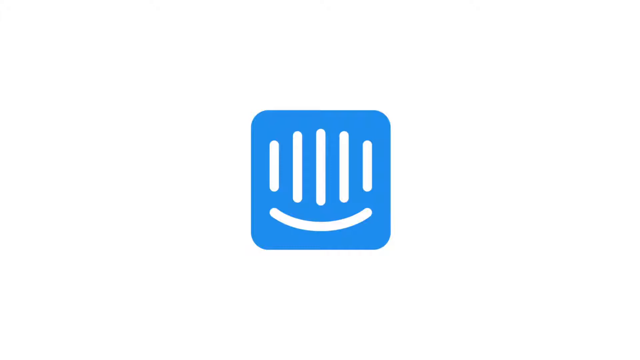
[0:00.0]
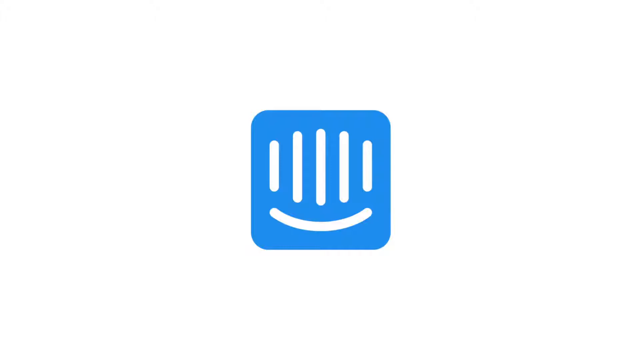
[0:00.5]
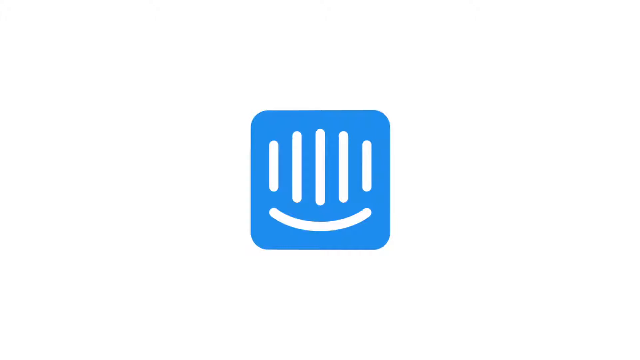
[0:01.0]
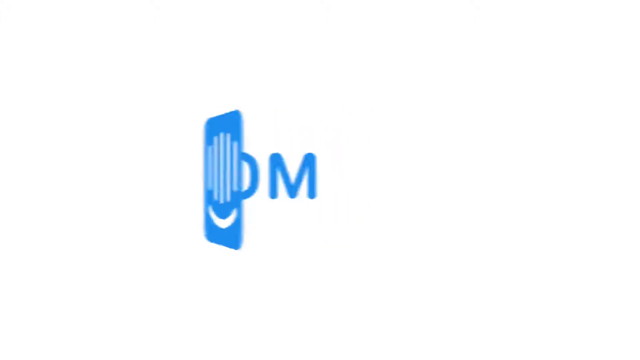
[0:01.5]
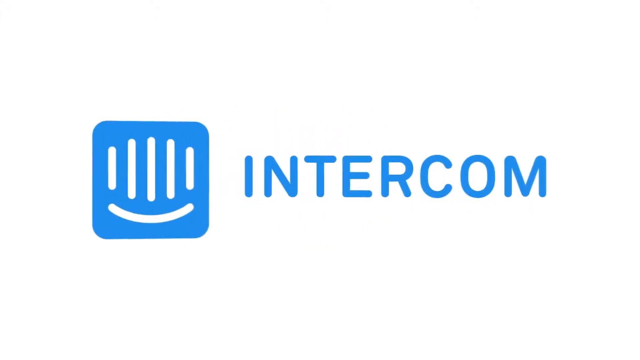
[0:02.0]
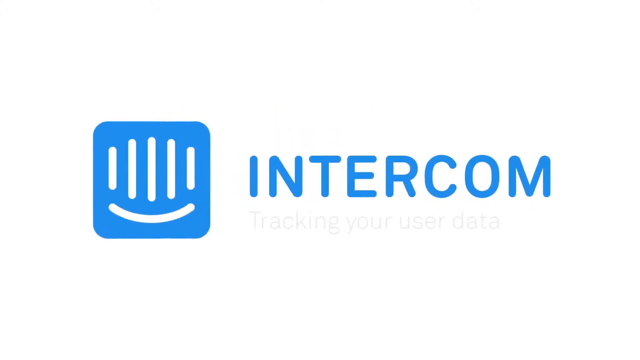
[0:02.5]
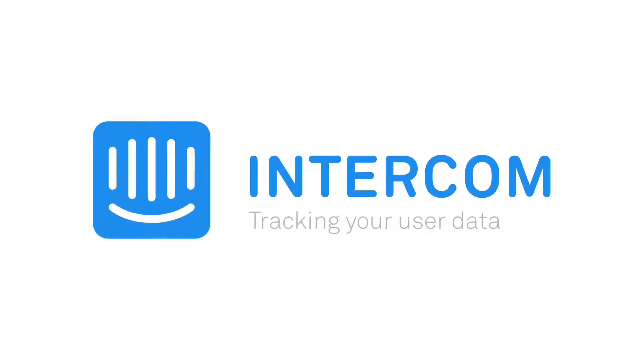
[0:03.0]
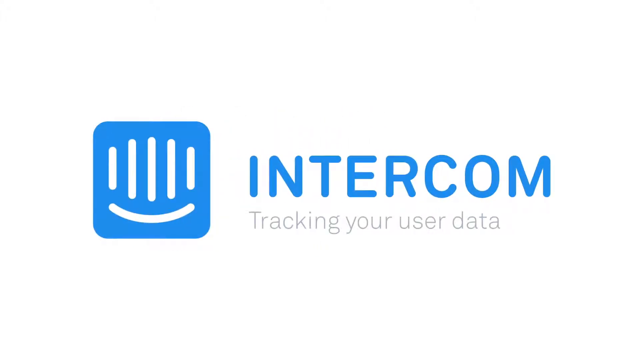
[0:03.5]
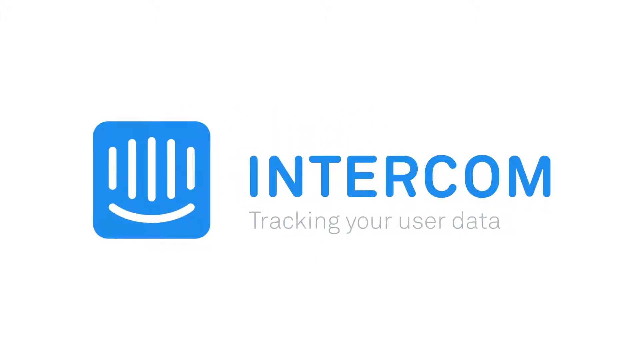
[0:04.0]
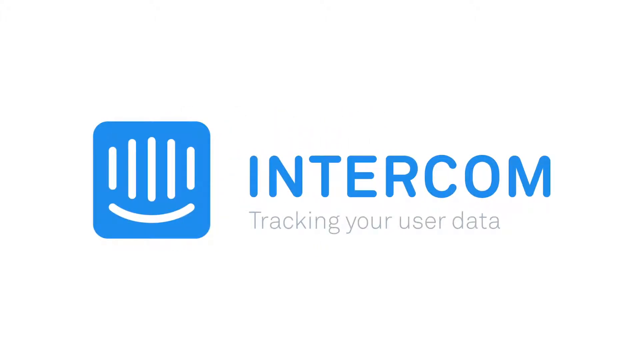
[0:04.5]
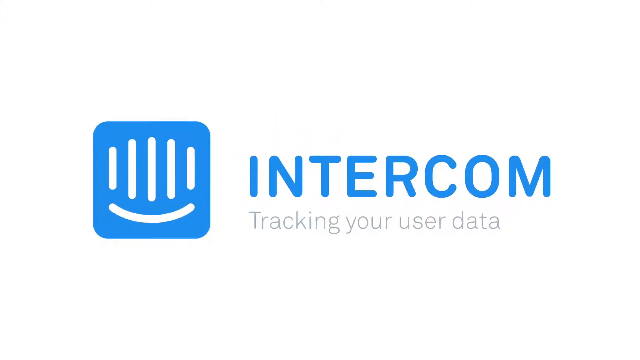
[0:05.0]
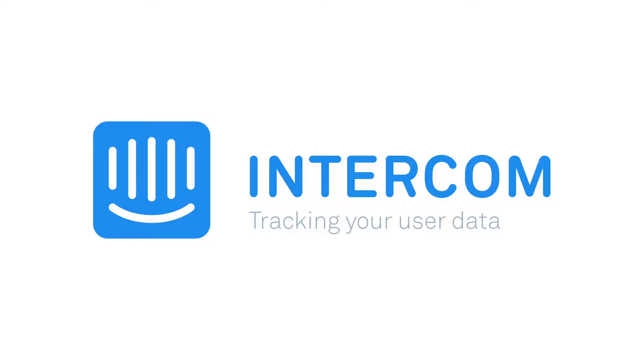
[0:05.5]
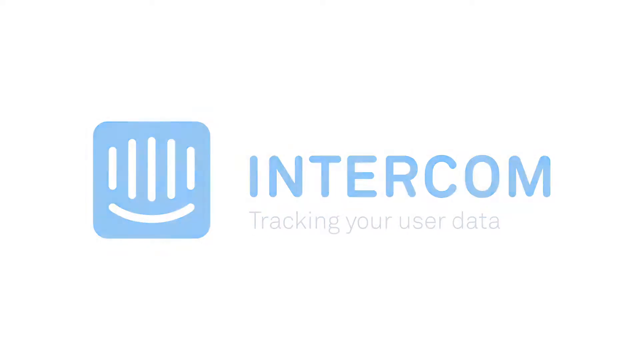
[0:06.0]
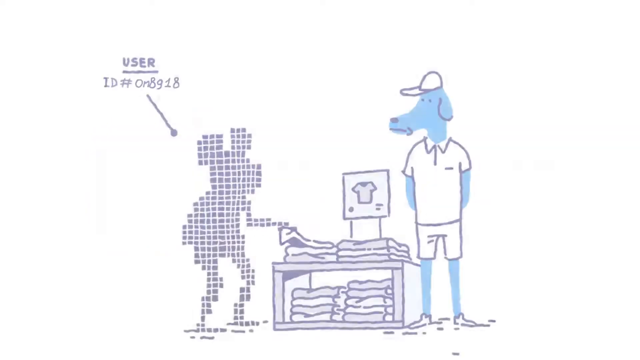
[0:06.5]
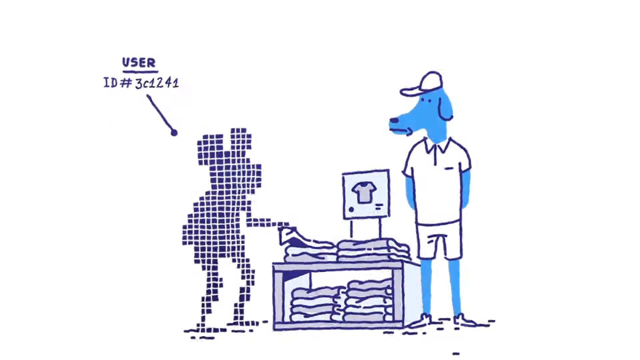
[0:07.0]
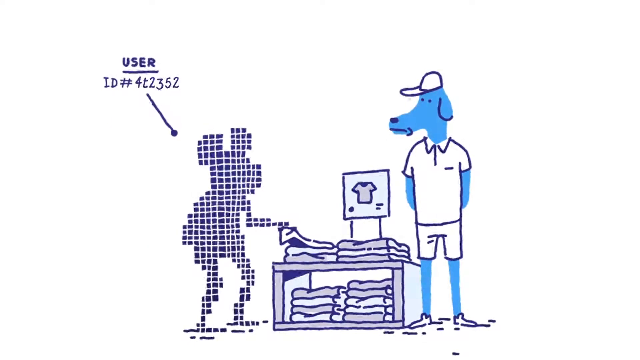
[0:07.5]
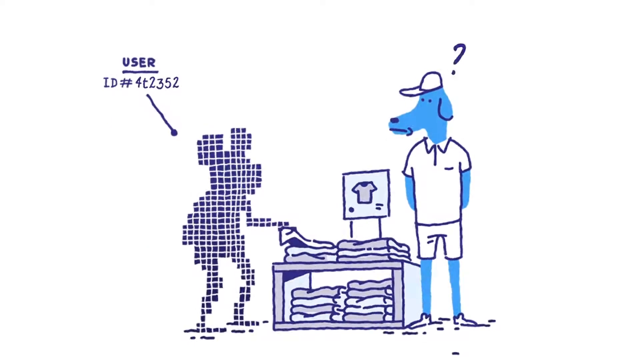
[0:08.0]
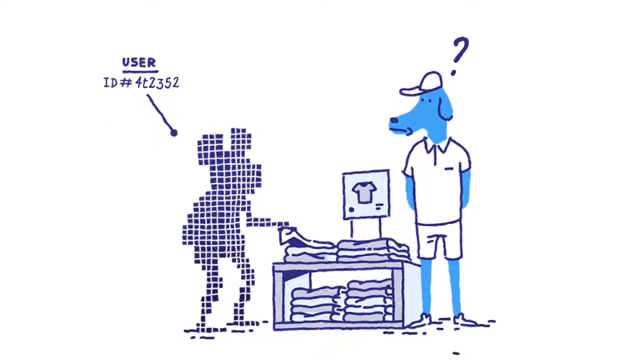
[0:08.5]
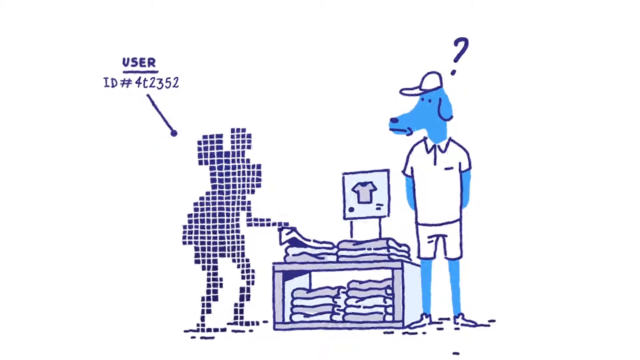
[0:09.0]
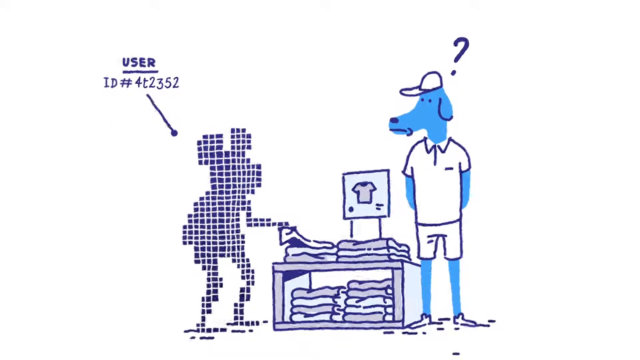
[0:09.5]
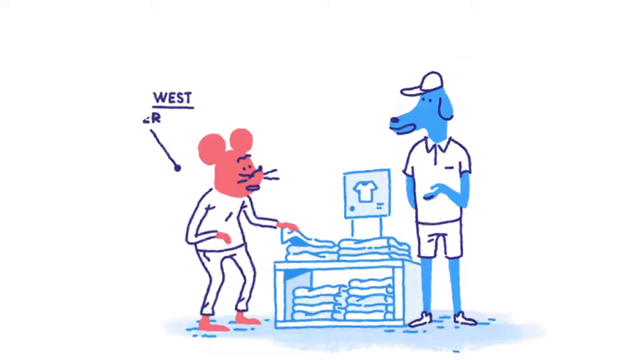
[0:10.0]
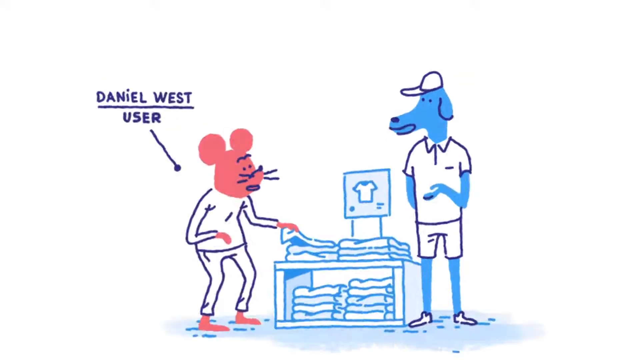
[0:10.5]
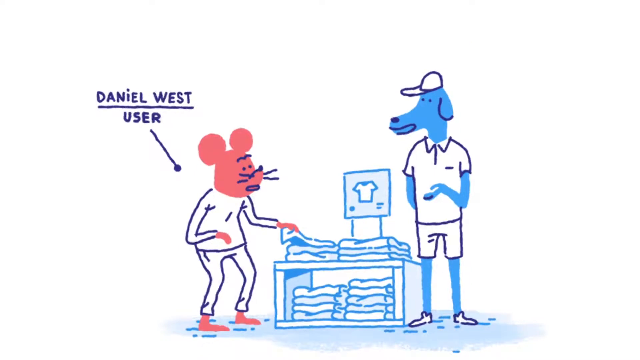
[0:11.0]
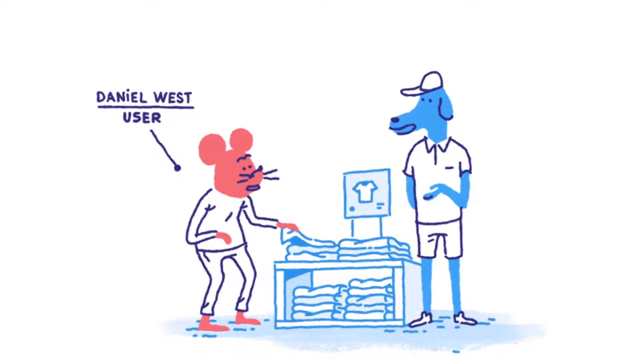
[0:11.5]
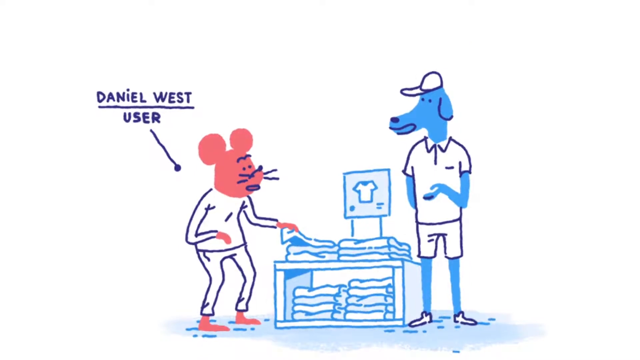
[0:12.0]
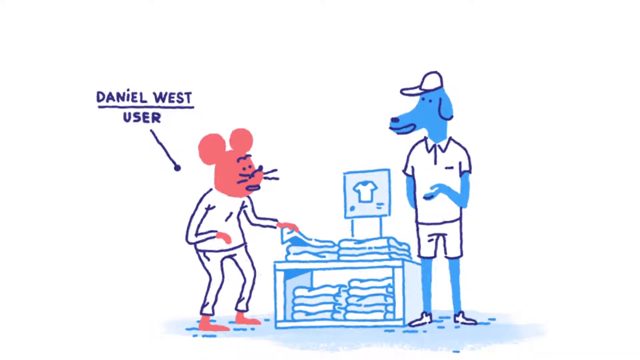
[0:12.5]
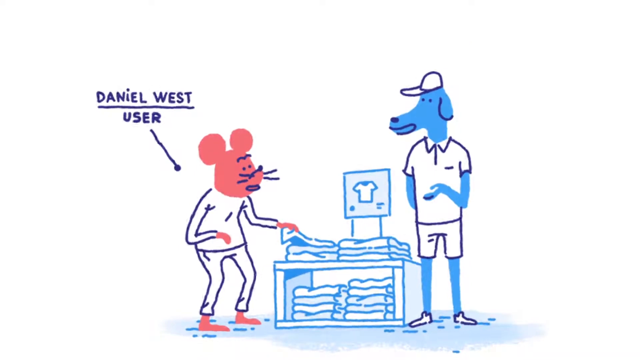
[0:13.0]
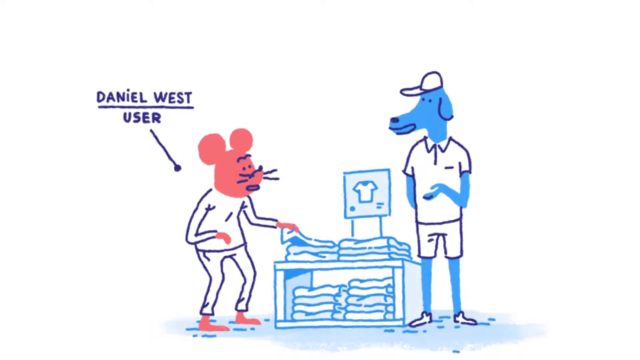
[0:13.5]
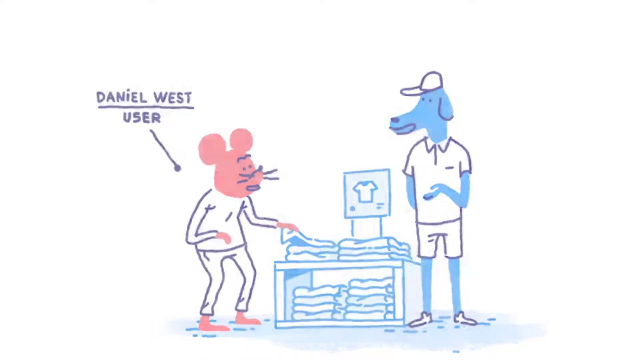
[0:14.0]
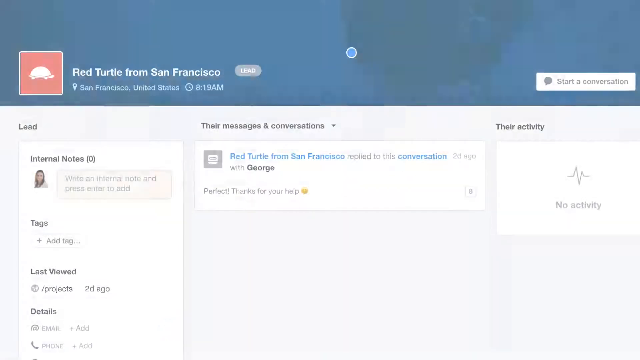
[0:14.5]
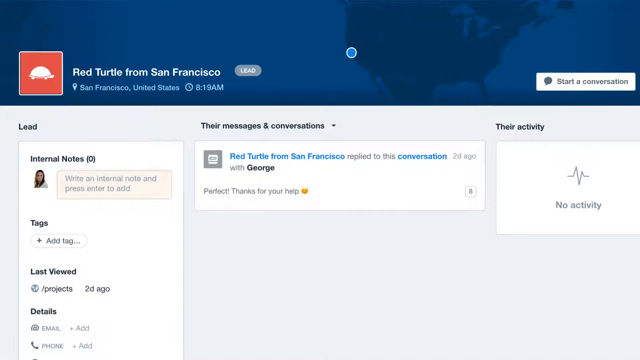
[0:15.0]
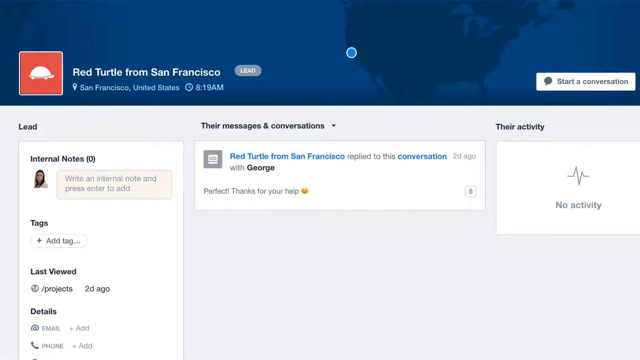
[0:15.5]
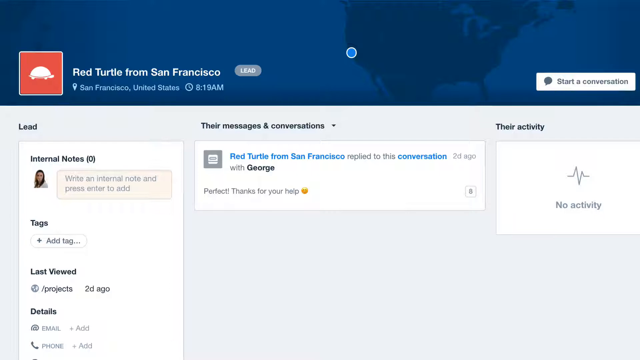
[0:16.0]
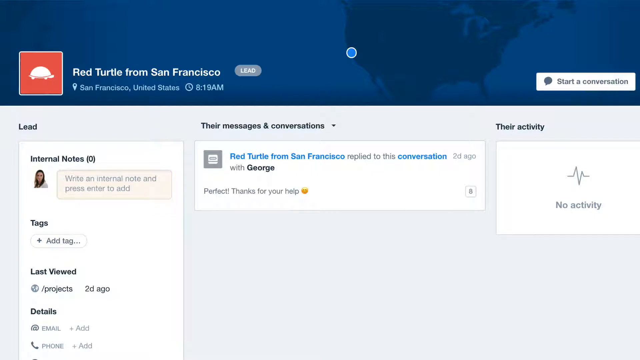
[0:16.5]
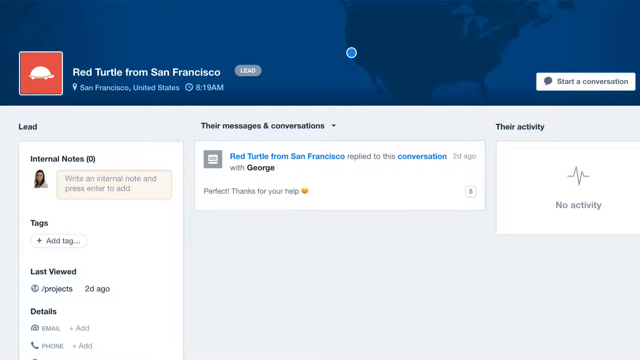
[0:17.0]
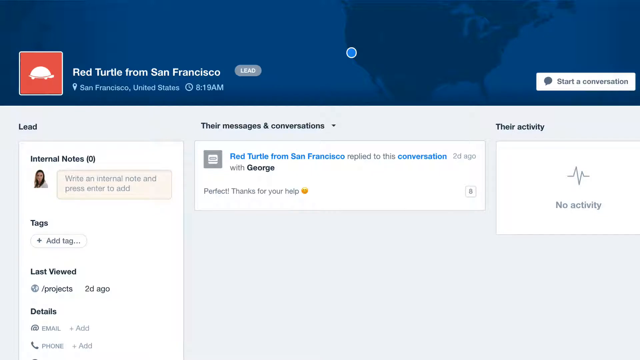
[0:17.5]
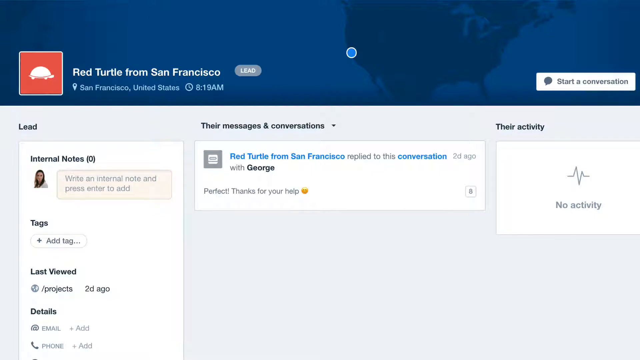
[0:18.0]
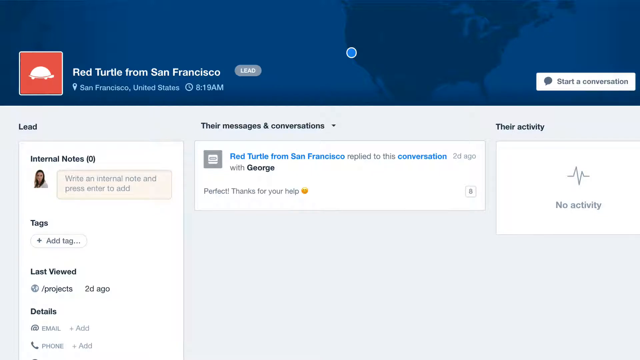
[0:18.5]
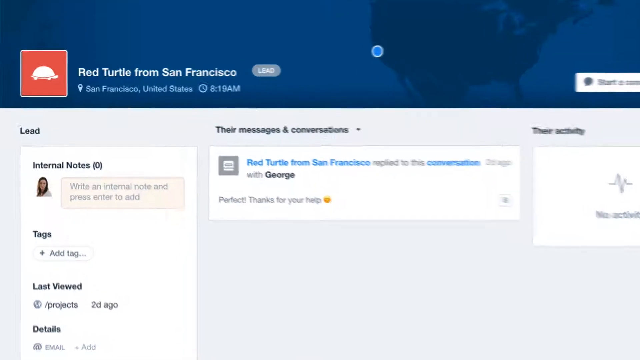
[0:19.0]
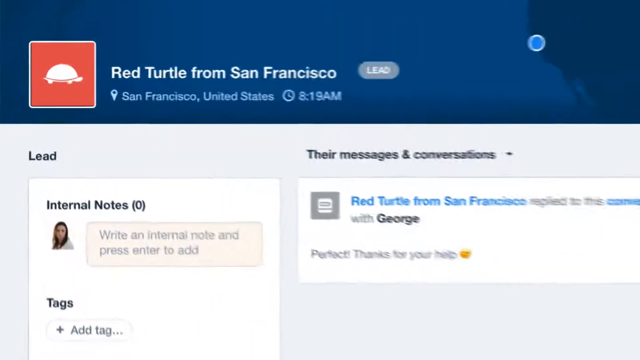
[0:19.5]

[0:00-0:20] An off-white ivory screen is dark at the bottom and fades into gray and then to off-white ivory. In the middle is a blue square with five vertical lines; the middle one is longer than the others, and they taper off to each side of the long line. Underneath them is a half circle that looks like it could be a smile from left to right. The screen then flips to text reading "Intercom tracking your user data." A pixeled mouse or pixel dog with pixeled ears standing up appears; its left upper extremity is pixeled into little squares, and it is reaching for something on a table. A picture of a shirt is tacked up on the paper, and on the back of the table it says "user ID #4T2352." To the right of this display is a larger figure that looks like a dog, with a blue body, blue limbs and blue legs, and a baseball hat on the question mark. Daniel West is shown as the user, with his pink head. The view then moves to a red turtle from San Francisco, with "San Francisco, United States" at 1:19 a.m.